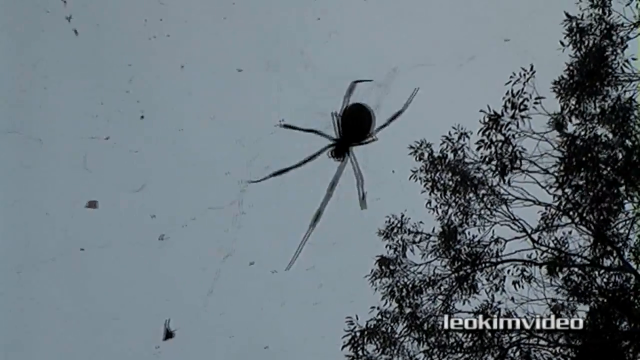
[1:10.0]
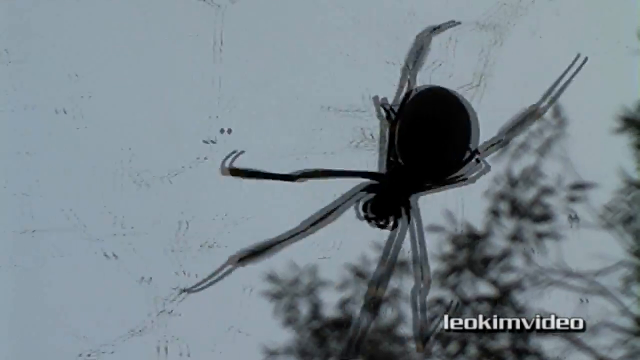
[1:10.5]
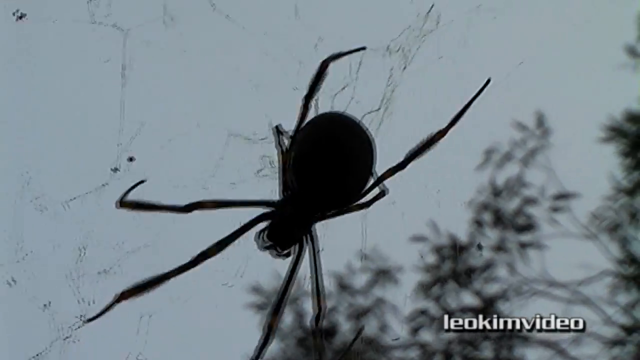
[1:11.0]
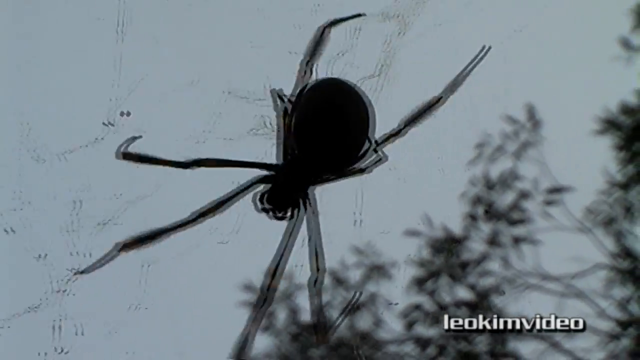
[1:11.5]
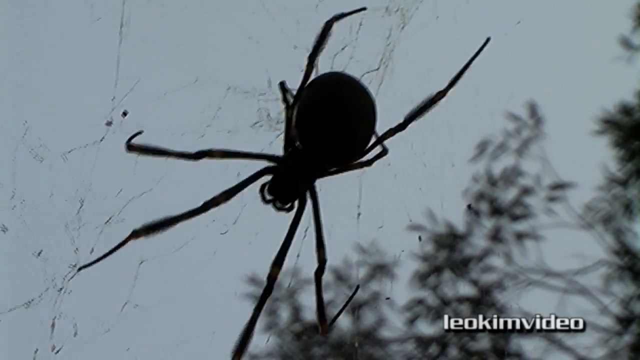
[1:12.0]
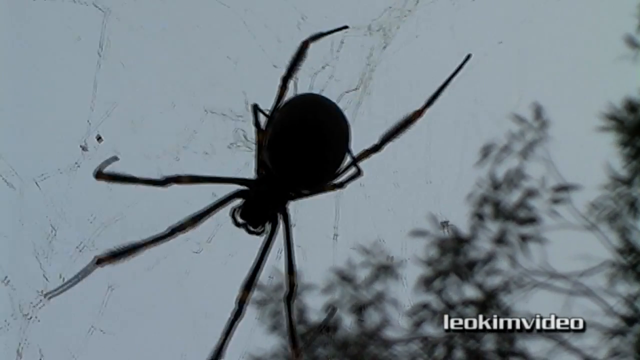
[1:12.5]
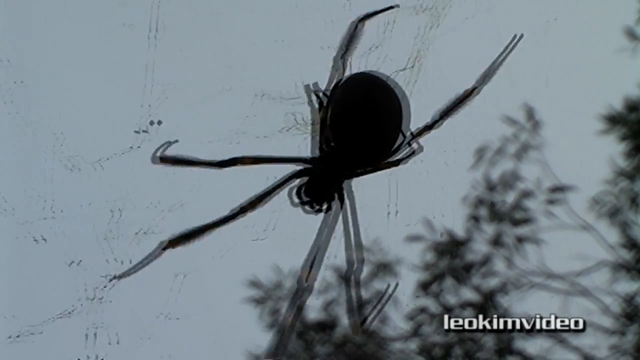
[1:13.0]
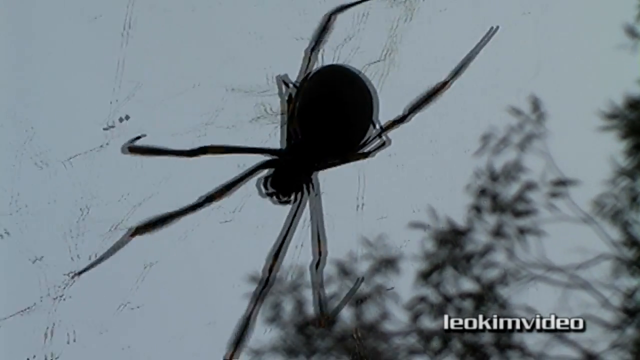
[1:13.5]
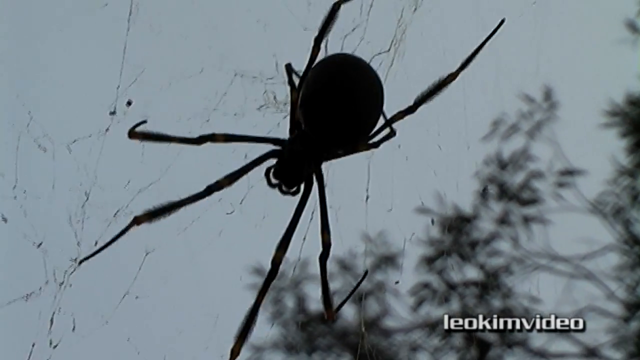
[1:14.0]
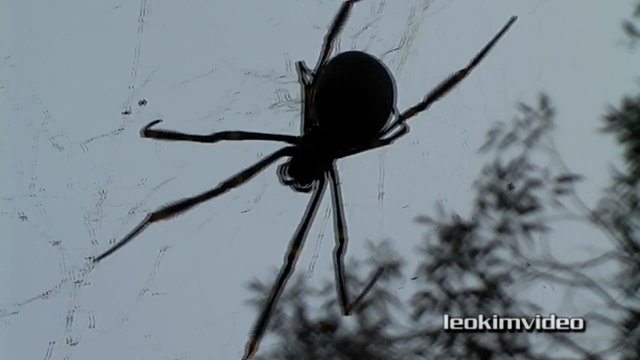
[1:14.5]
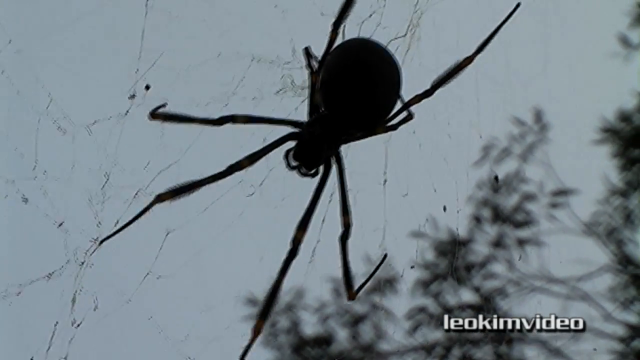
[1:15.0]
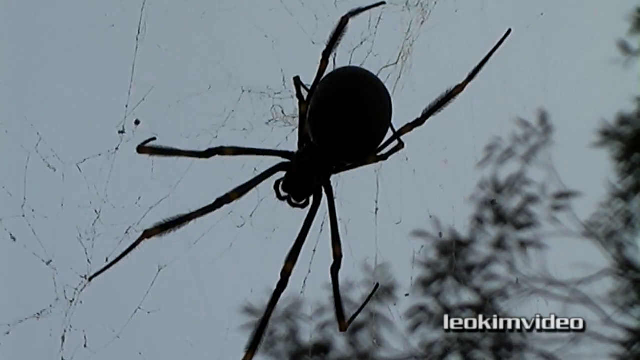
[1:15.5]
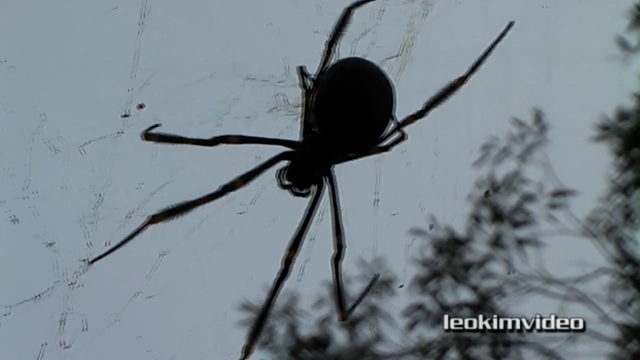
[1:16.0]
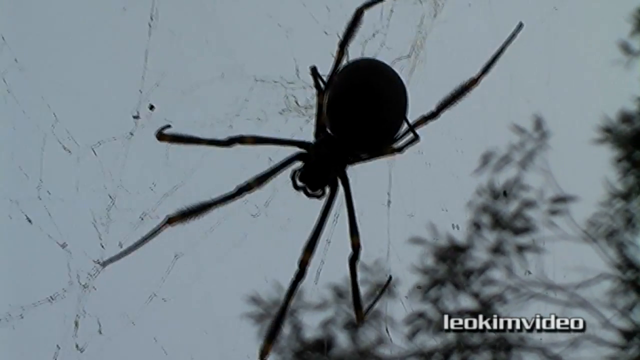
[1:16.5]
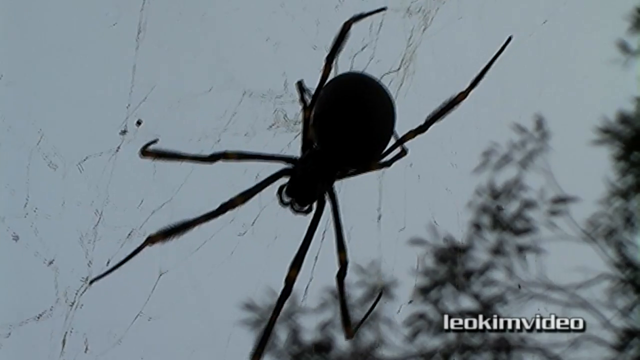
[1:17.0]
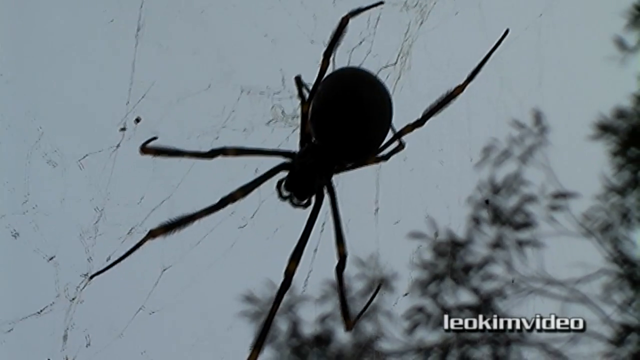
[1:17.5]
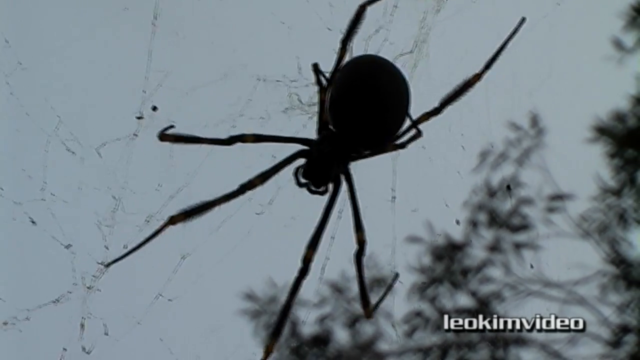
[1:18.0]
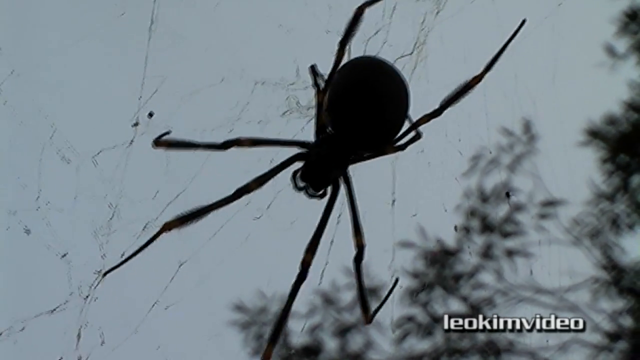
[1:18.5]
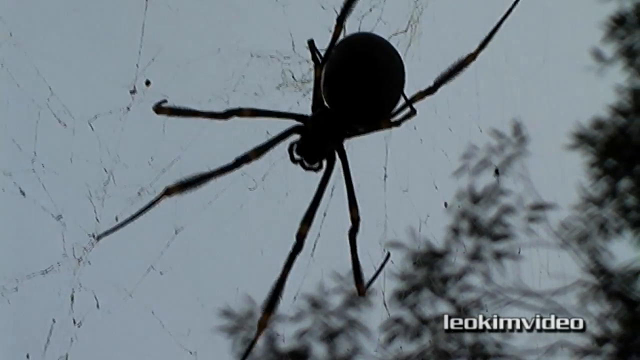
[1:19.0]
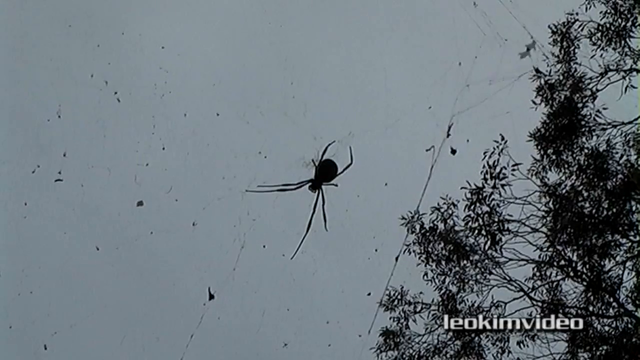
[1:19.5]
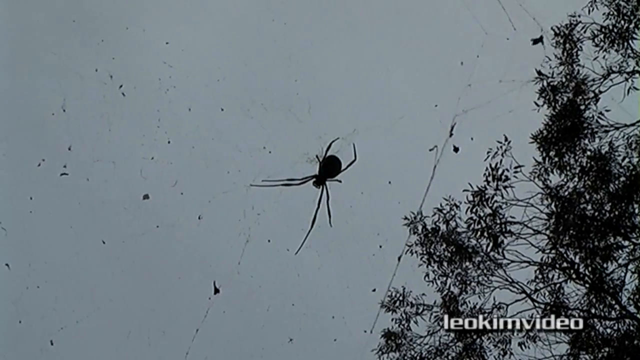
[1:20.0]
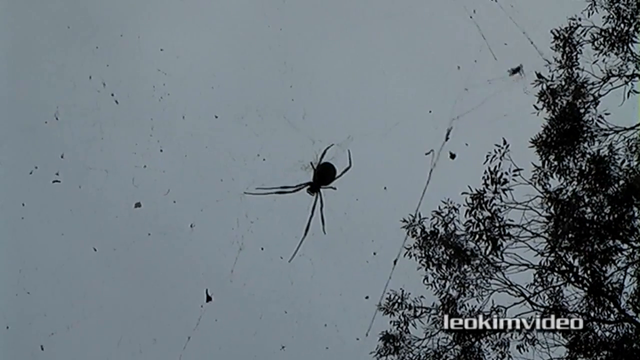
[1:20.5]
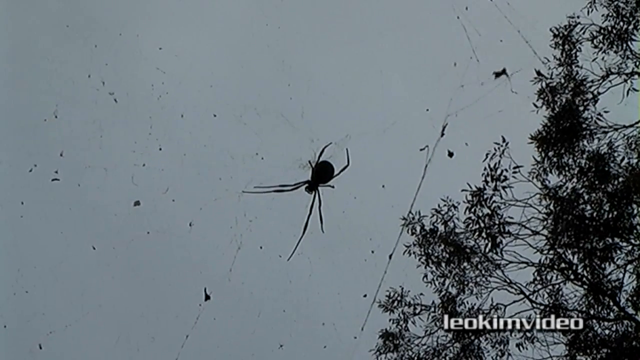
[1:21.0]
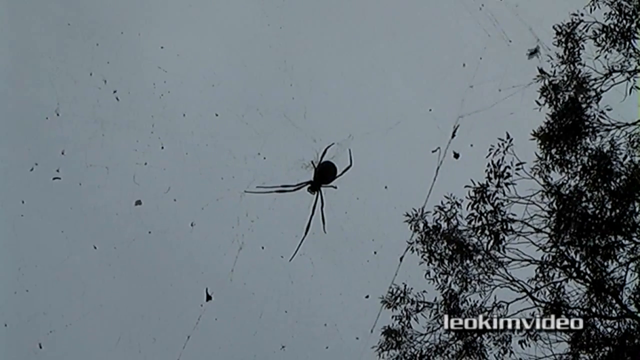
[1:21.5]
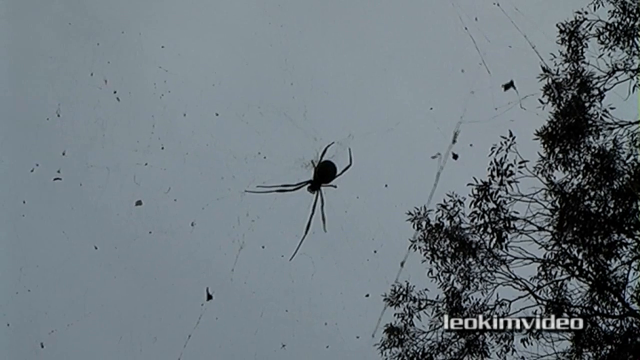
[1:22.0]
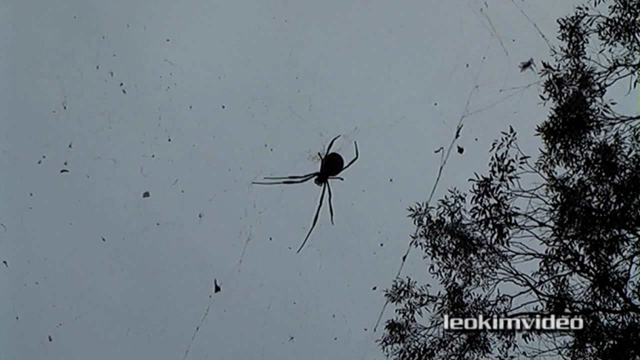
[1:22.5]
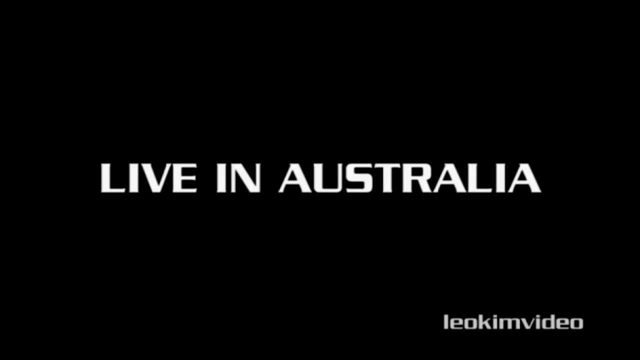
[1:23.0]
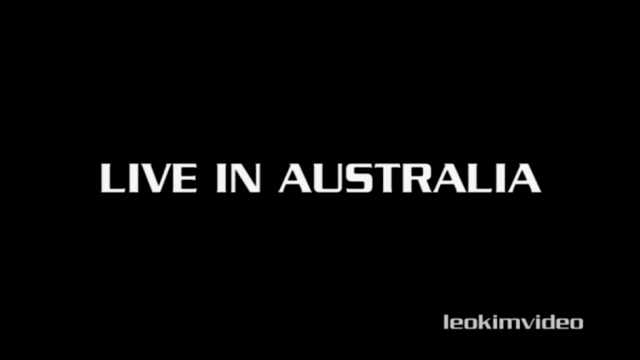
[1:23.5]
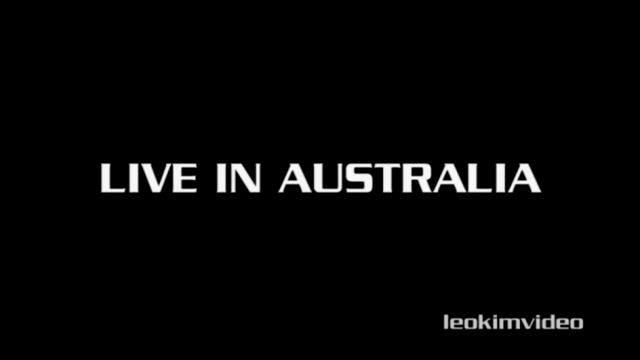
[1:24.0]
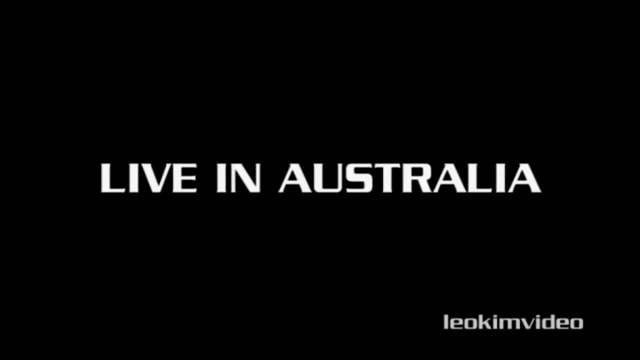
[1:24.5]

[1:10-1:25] The very big spider in the web is seen again up close. Something sticks out from its head, possibly feelers, apparently fangs, and it is unclear what the small legs near its body are. The video is from Australia. Trees are in the background, and the sky is very gray, with no sunshine or clouds, just a dreary-looking sky. The debris in the web looks to be just dirt. The leaves in the tree move in the wind, and the web moves back and forth with the spider in it while the spider sits back.